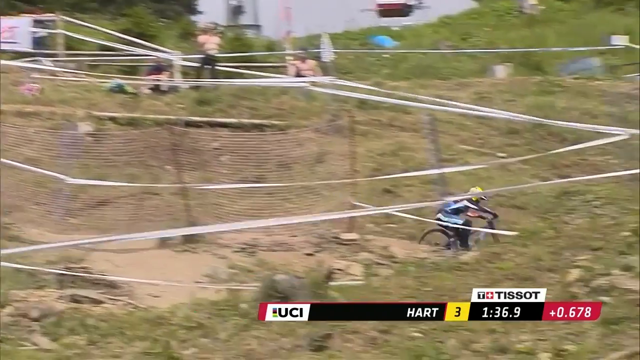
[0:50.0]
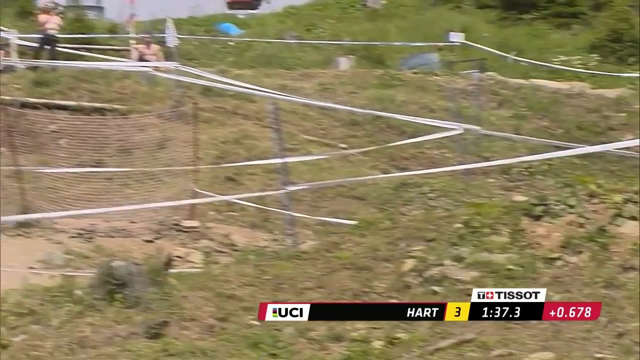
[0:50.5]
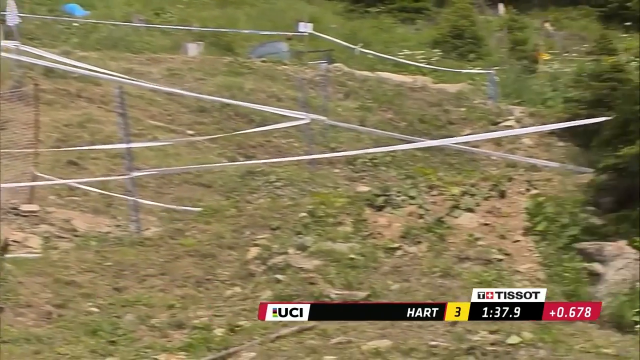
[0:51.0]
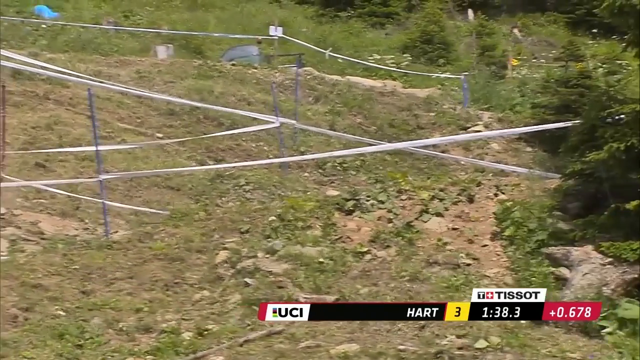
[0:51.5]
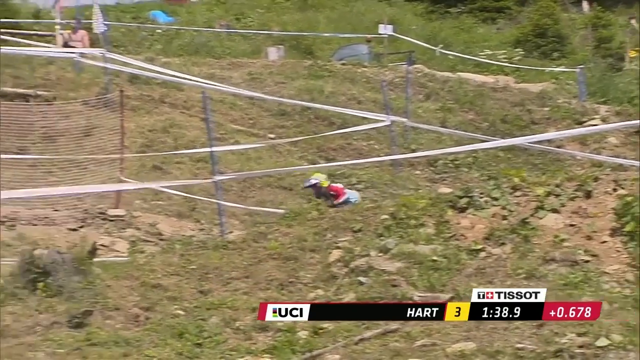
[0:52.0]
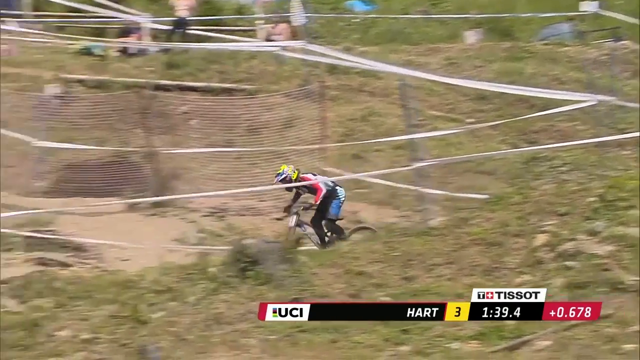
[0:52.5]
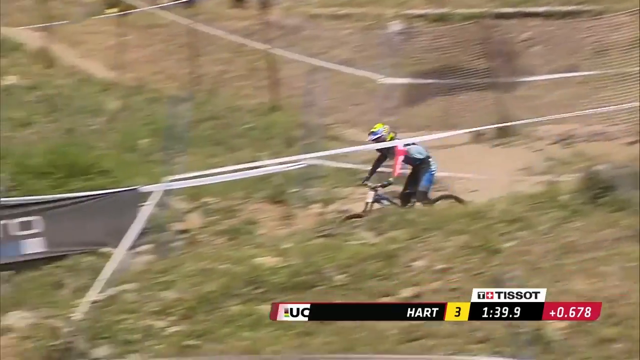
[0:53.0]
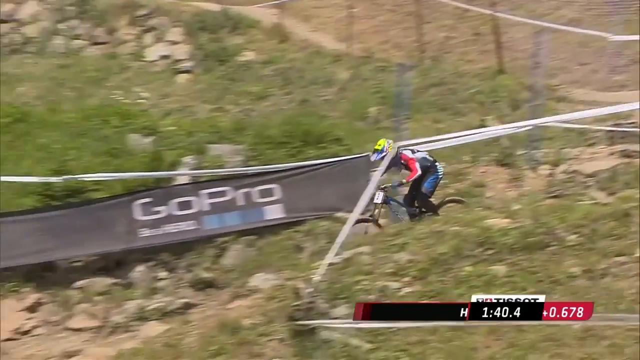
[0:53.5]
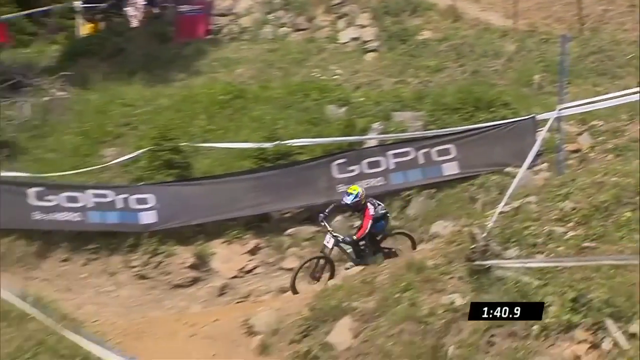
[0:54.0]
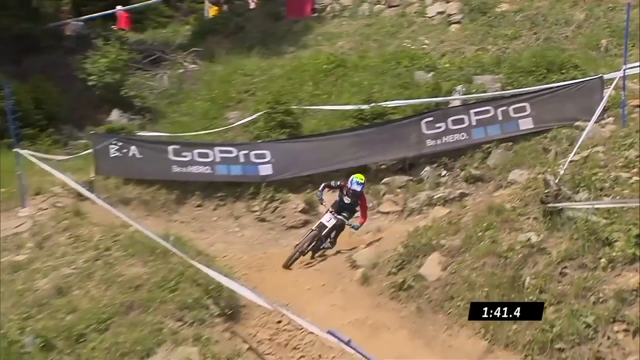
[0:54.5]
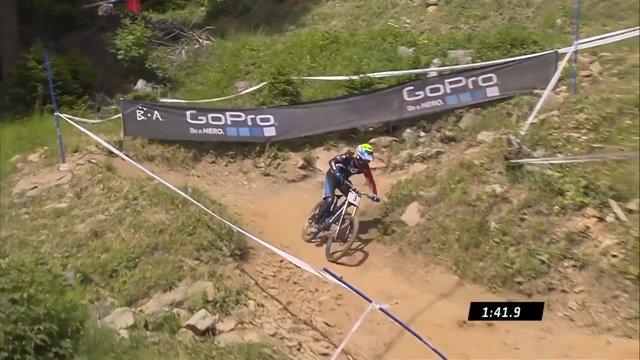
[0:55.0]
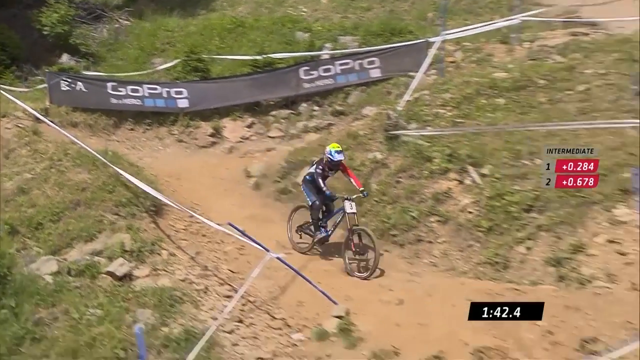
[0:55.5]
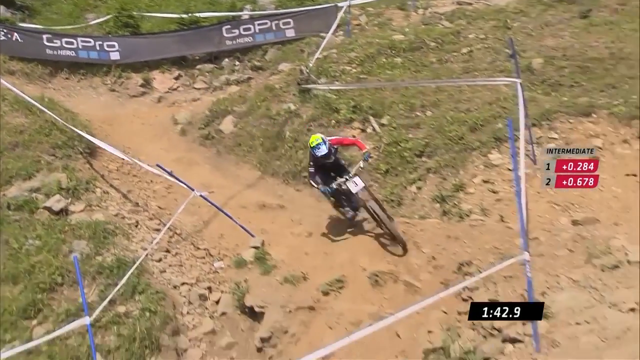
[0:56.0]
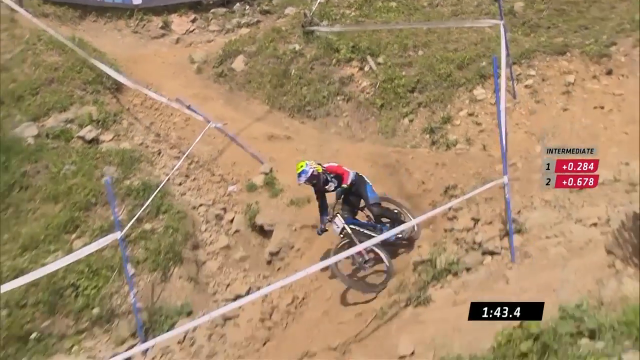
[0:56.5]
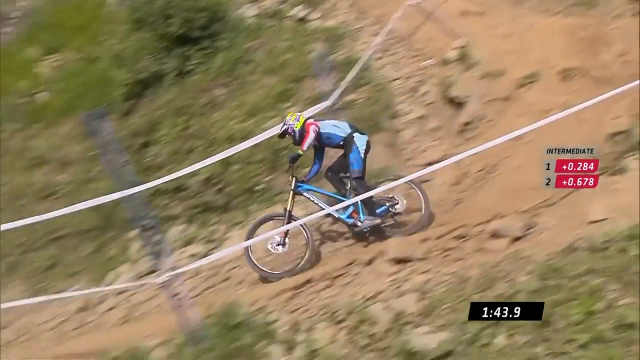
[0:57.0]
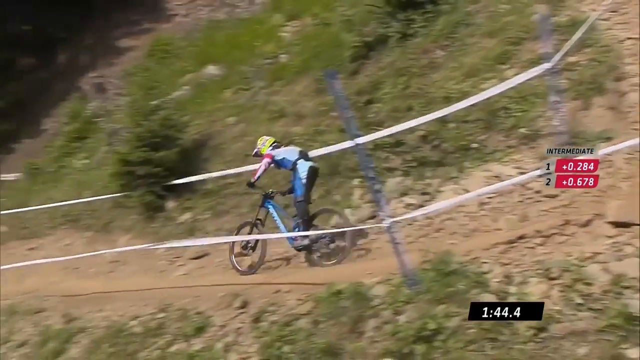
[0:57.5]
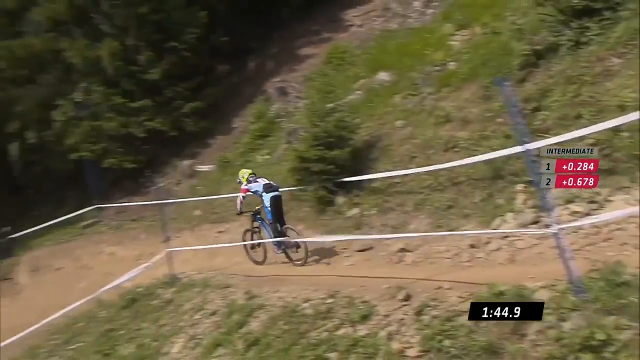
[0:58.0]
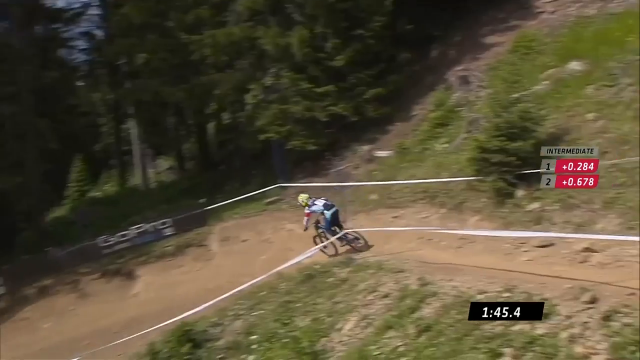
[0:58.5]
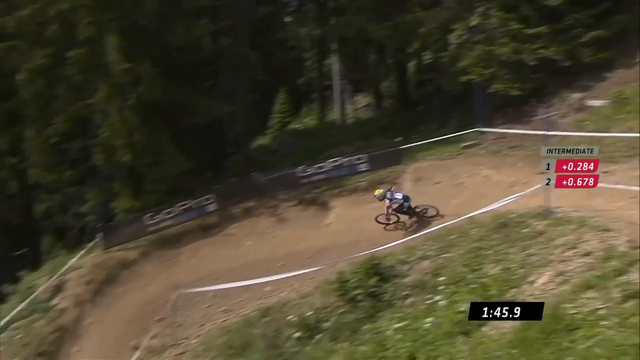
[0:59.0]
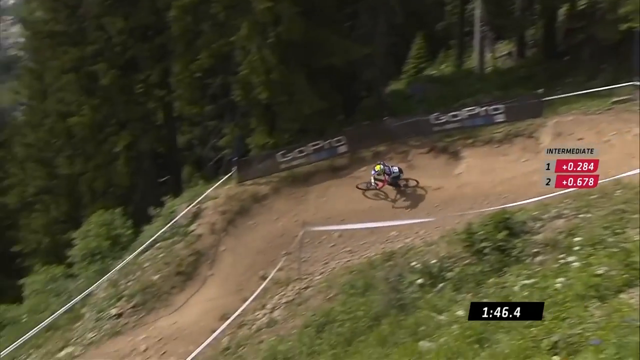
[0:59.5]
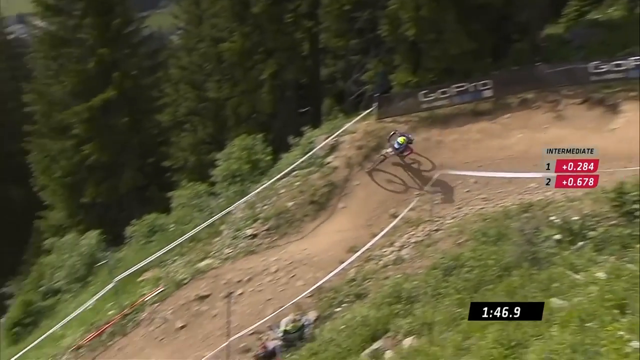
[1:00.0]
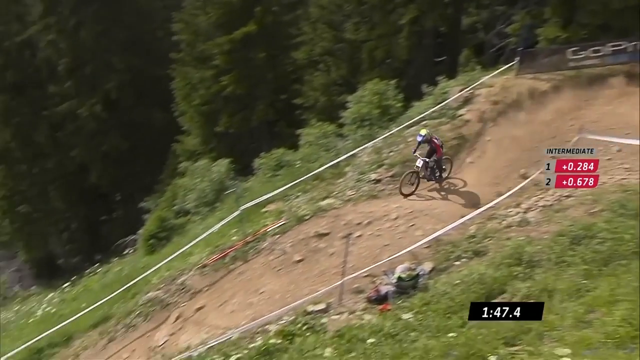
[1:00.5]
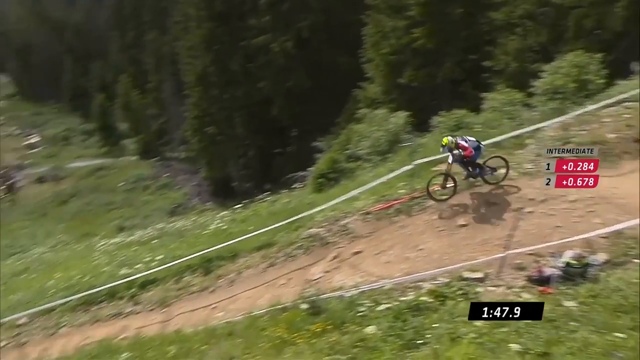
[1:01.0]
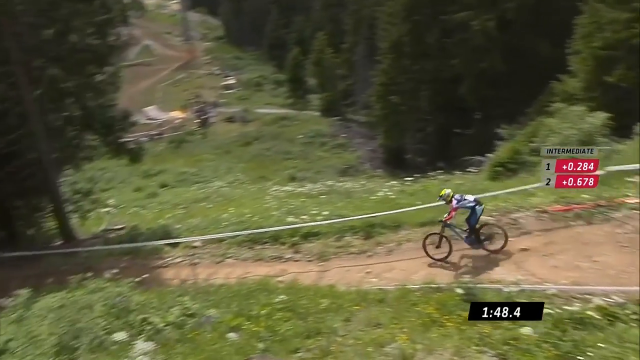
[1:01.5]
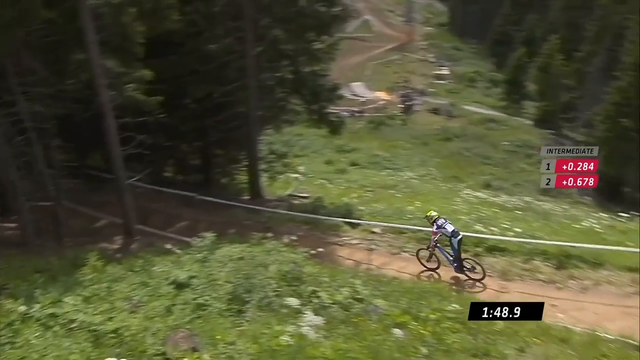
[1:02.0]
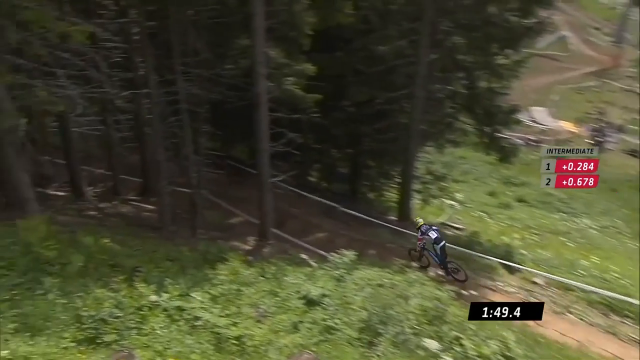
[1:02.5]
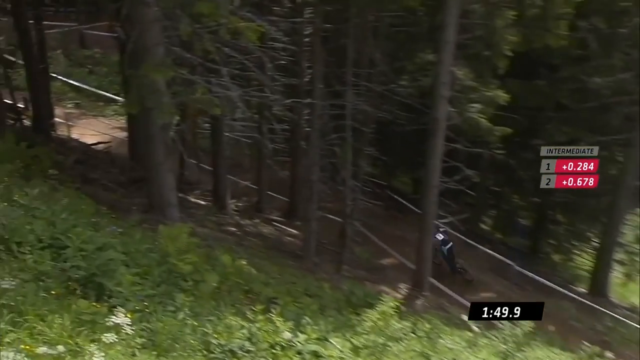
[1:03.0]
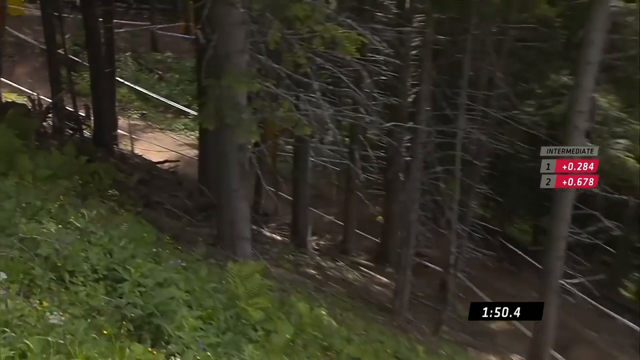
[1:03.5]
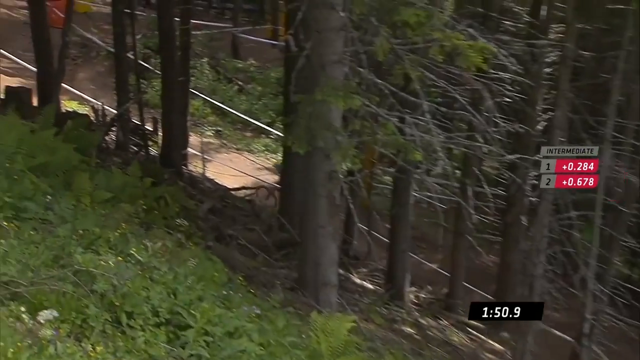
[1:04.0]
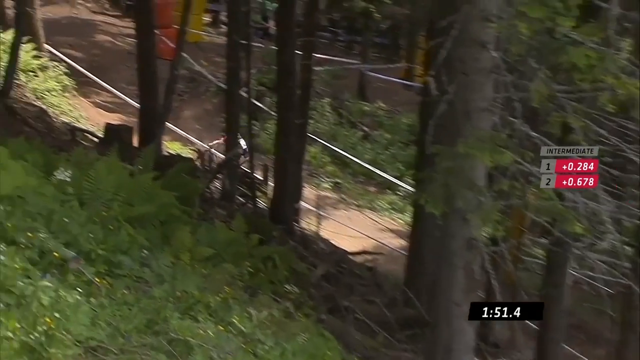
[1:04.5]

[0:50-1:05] Having just jumped off a platform and over a small cliff with people on it, the biker lands on a tricky part of the path. He quickly maneuvers a couple of sharp hairpin turns on the dirt path, which is marked on either side with white tape; on one of the drops he has to turn quickly because of a steep drop-off at the side of the path. He navigates the turns over rocks and dirt, goes over a small bump, and then heads down a hill into the treeline. A Red Bull logo is in the lower right-hand corner of the screen, along with his name and the elapsed time on the track so far.